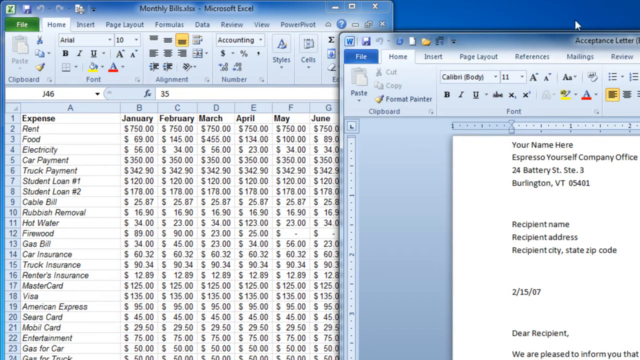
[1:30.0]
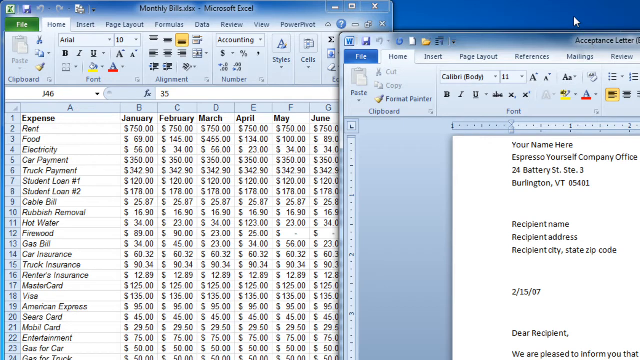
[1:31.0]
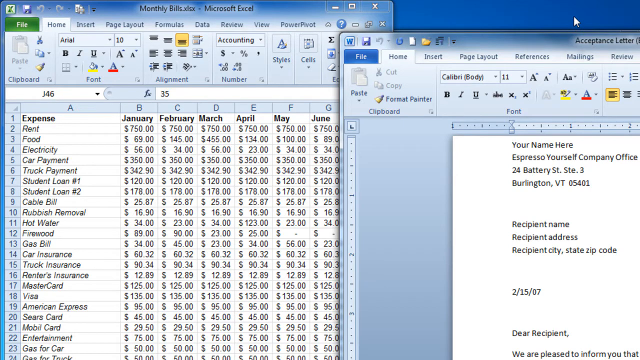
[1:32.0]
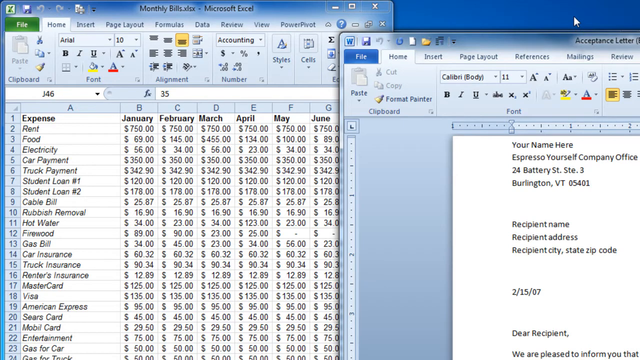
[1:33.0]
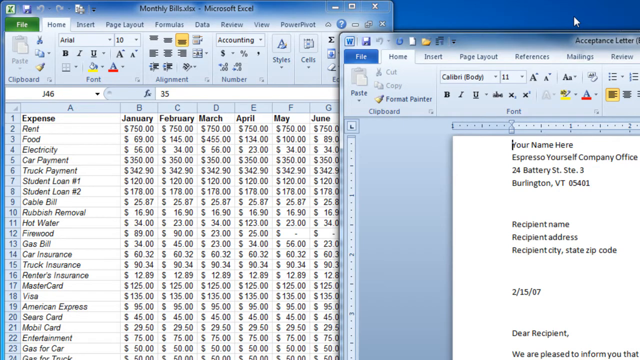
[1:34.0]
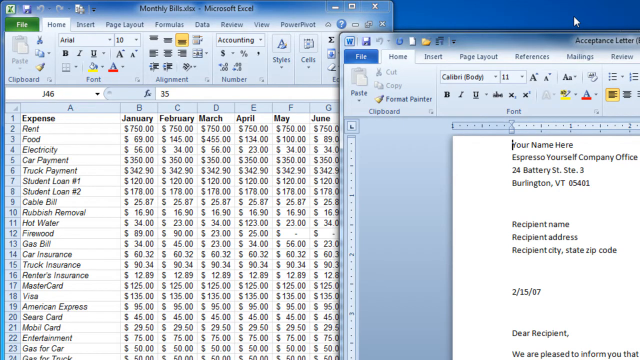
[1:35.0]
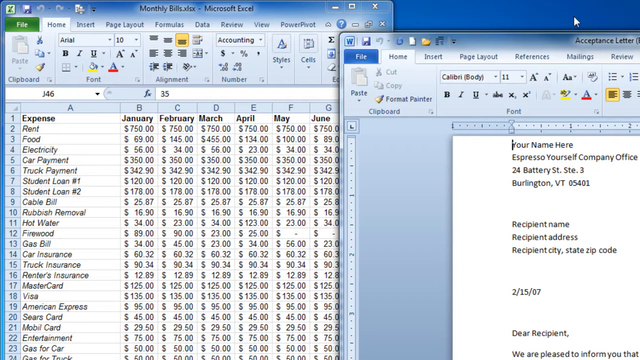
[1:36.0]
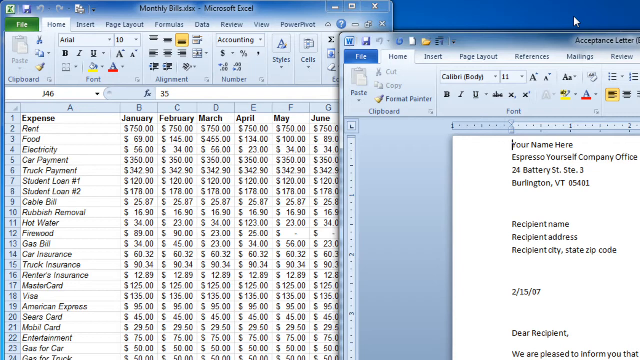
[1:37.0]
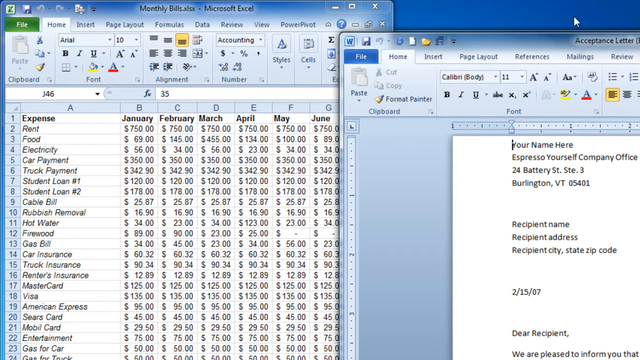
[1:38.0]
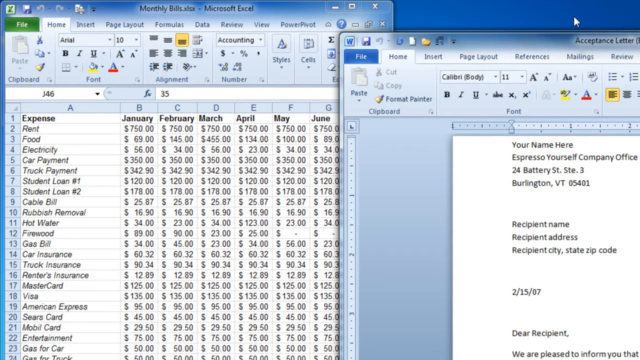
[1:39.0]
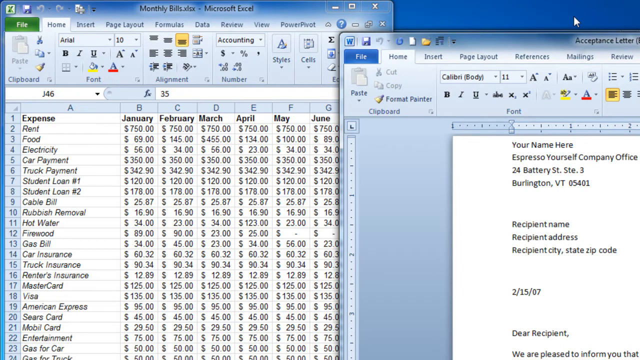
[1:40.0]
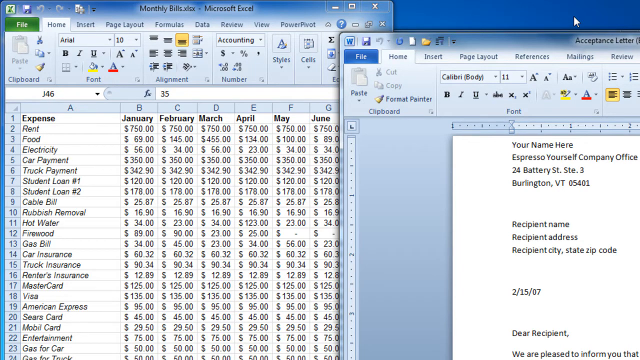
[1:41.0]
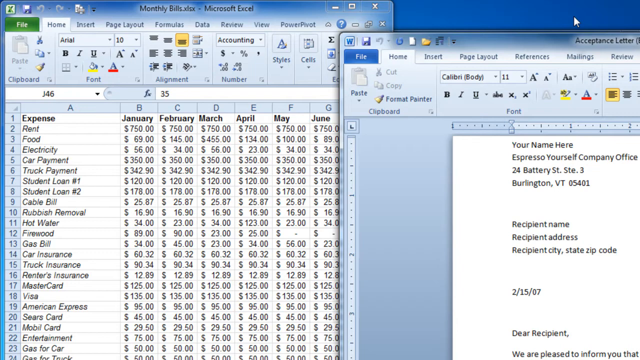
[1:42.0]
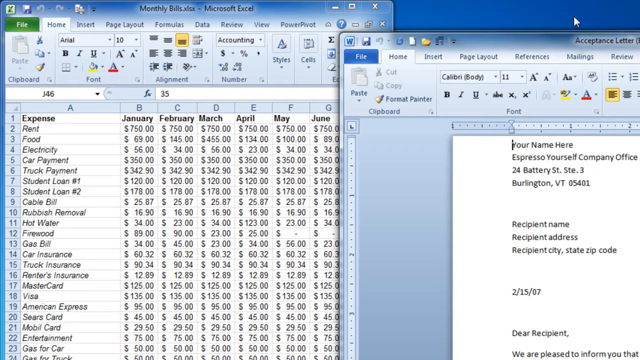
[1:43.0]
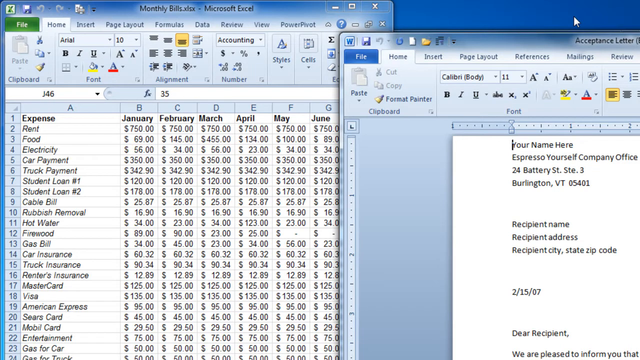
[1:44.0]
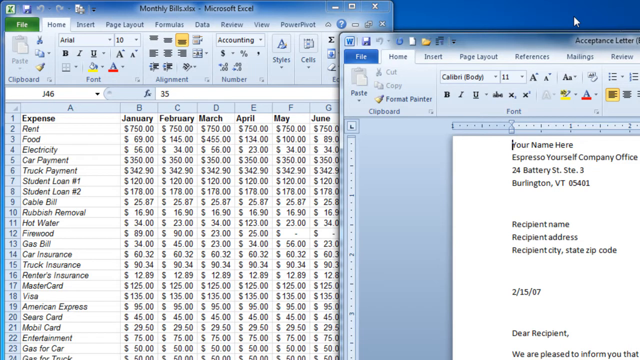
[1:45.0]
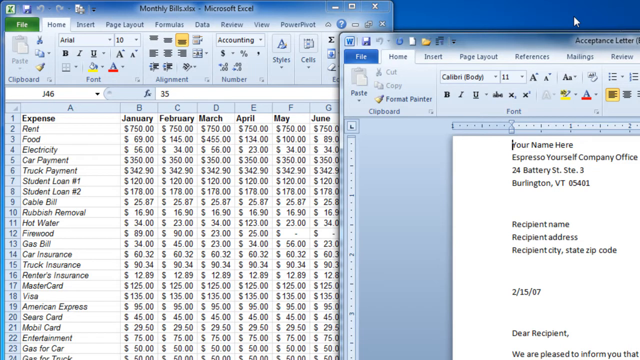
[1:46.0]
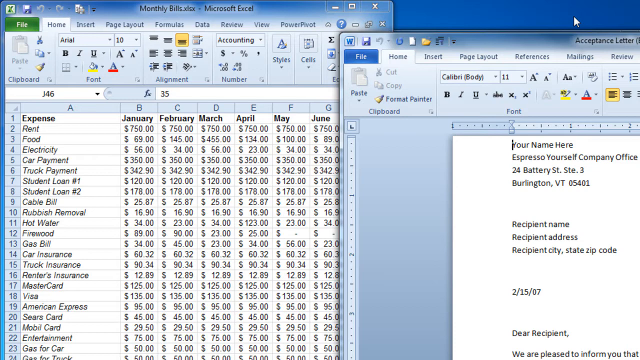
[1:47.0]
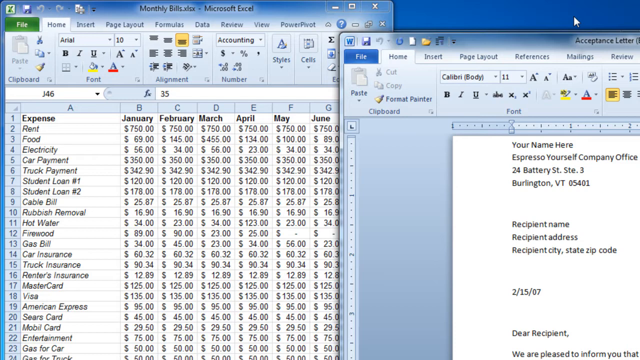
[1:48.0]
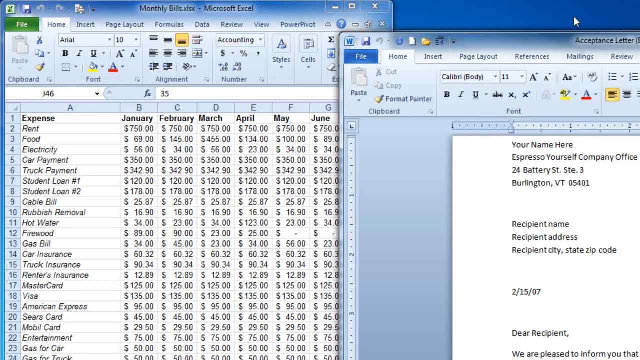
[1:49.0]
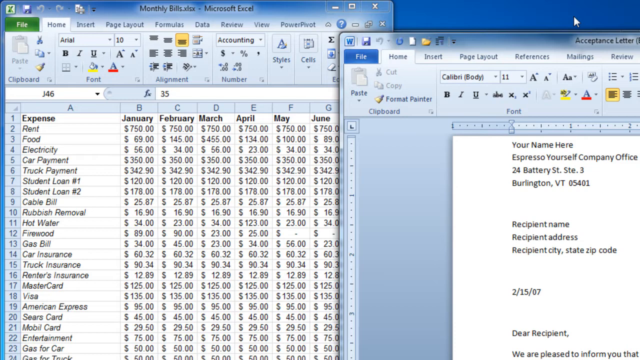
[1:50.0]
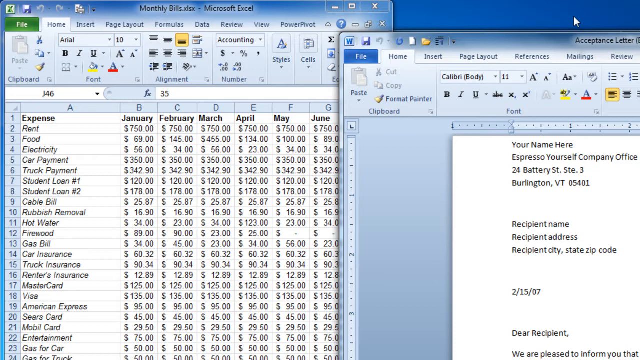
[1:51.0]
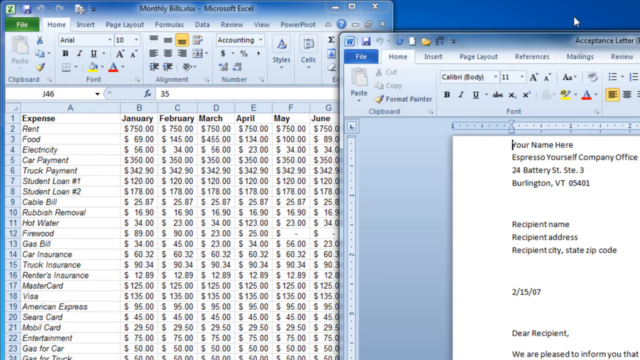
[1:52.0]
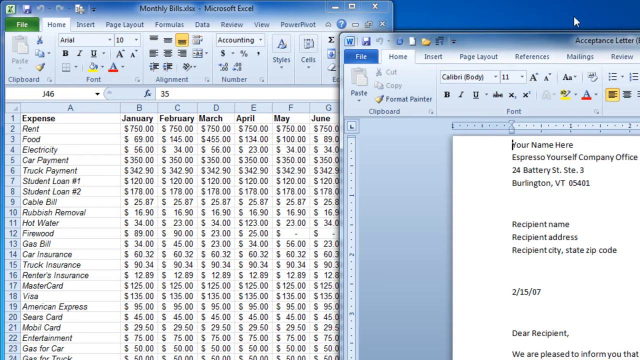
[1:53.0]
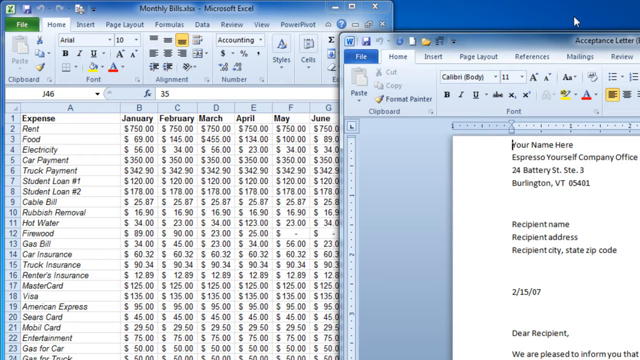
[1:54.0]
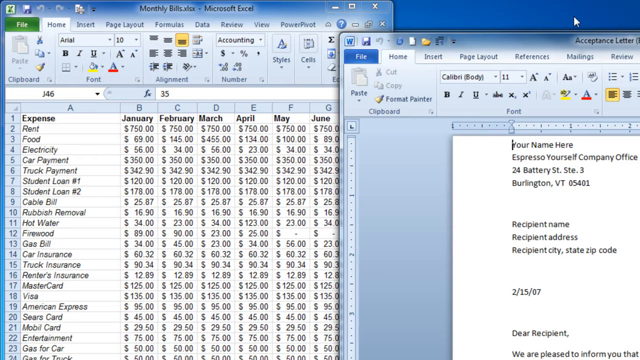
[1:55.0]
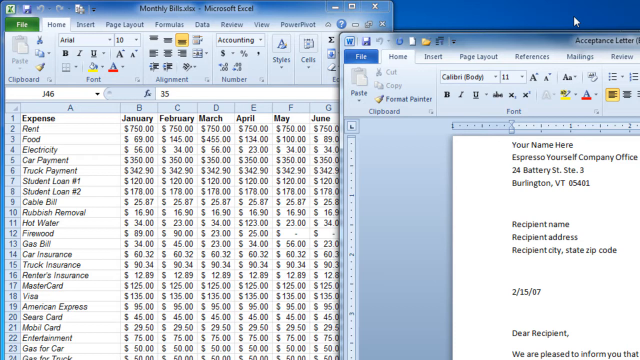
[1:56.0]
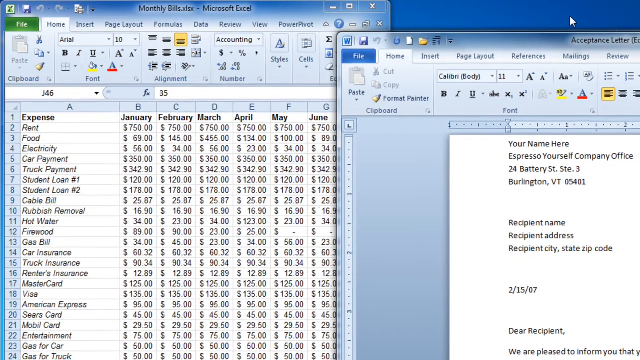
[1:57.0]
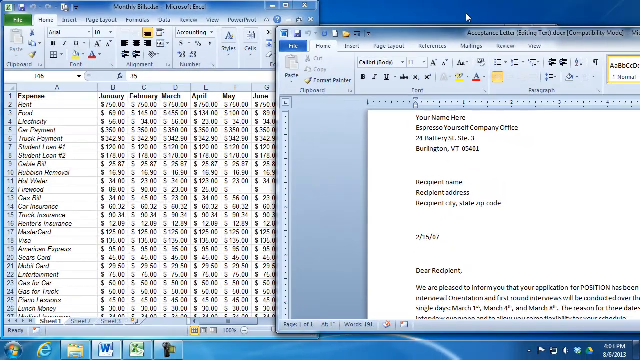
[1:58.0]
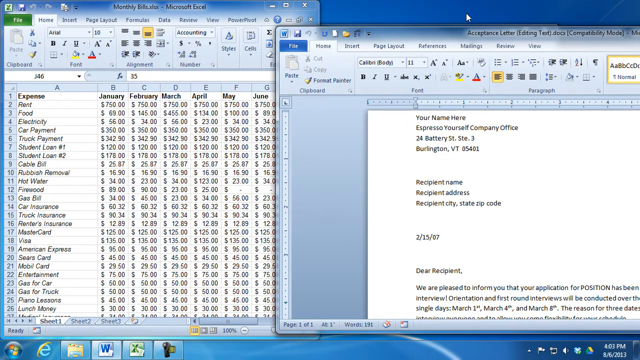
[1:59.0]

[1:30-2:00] The cursor is just above the acceptance letter, over the blue desktop. The blinking text cursor remains to the left of "your name here" in the acceptance letter, and little else is happening. At the top of the monthly bills window are the green tab and the headers for expense and some of the months. The acceptance letter uses Calabari for the body font, at size 11. The letter has a block of four lines from "your name here" through the city, then about three spaces down, the recipient name, recipient address, and recipient city, state and zip code, a few more spaces, the date, probably three more spaces, and then the greeting "dear recipient". The view zooms out a little so more of the acceptance letter is visible. In the monthly bills window on the left, the row numbers 1 through 22 are visible to the left of column A, ending at entertainment, and the columns are labeled with letters A through G. The letter shows a ruler with indentation arrows for adjusting the spacing.